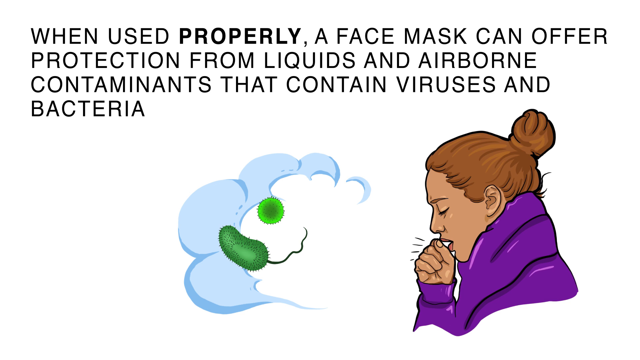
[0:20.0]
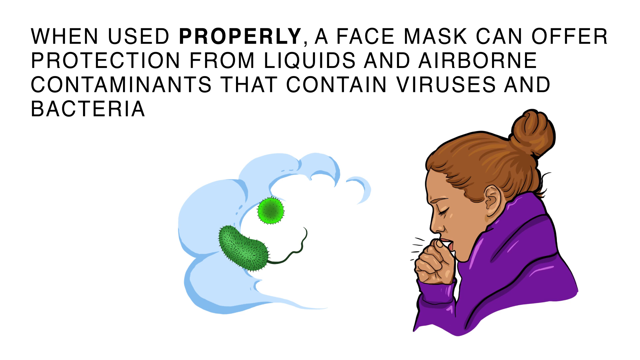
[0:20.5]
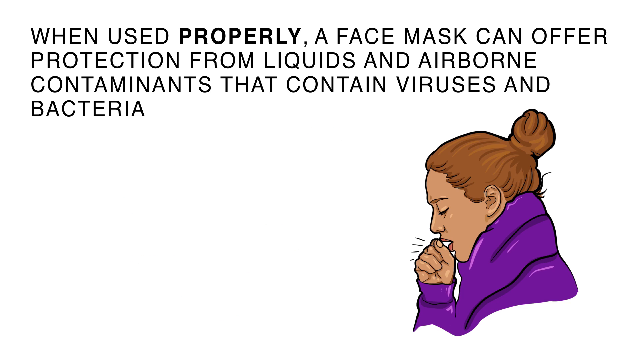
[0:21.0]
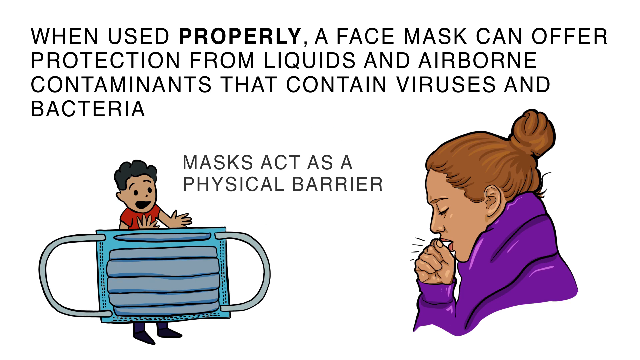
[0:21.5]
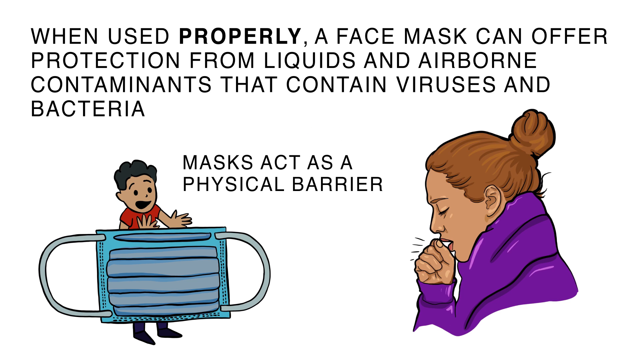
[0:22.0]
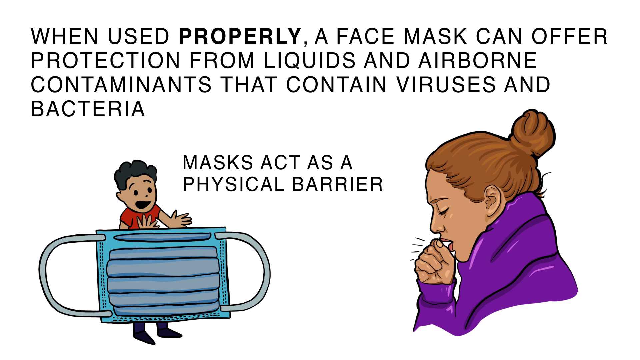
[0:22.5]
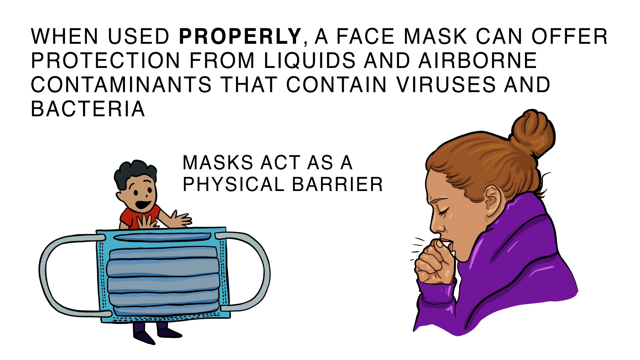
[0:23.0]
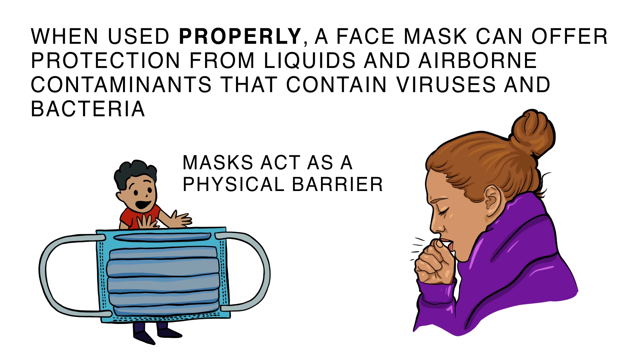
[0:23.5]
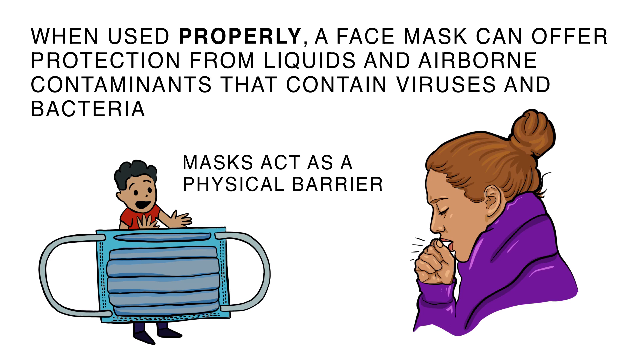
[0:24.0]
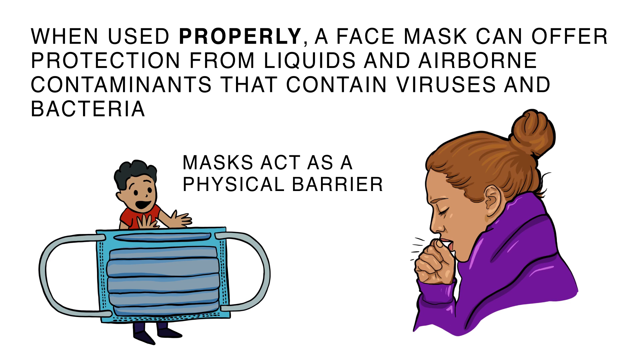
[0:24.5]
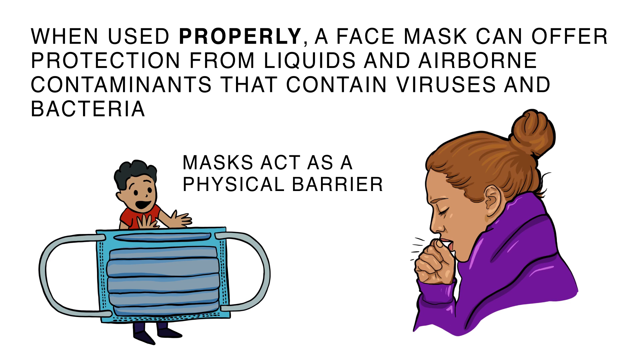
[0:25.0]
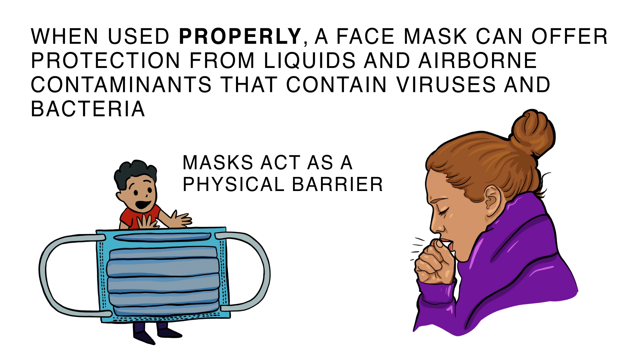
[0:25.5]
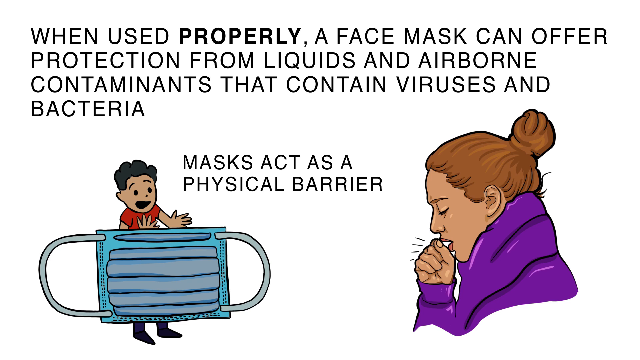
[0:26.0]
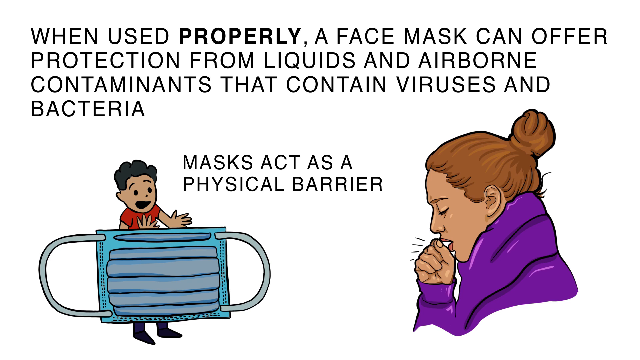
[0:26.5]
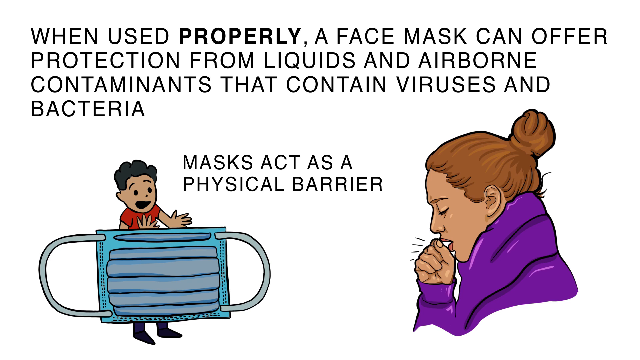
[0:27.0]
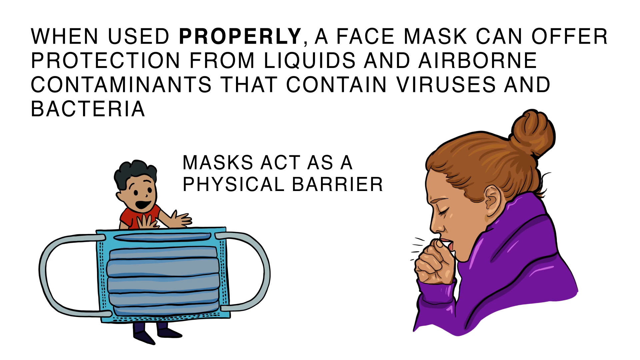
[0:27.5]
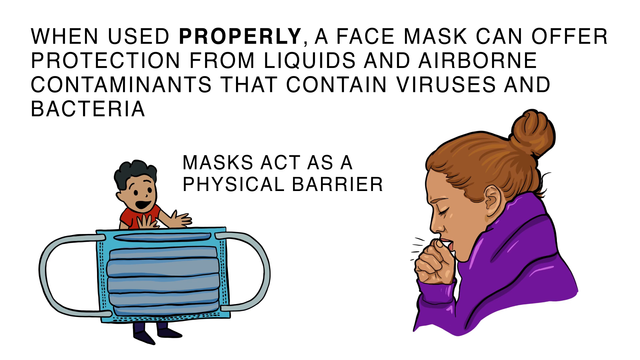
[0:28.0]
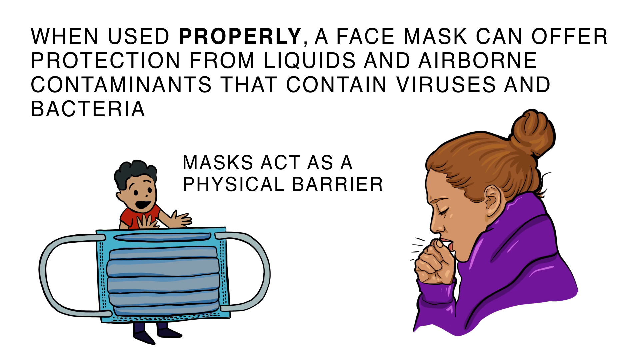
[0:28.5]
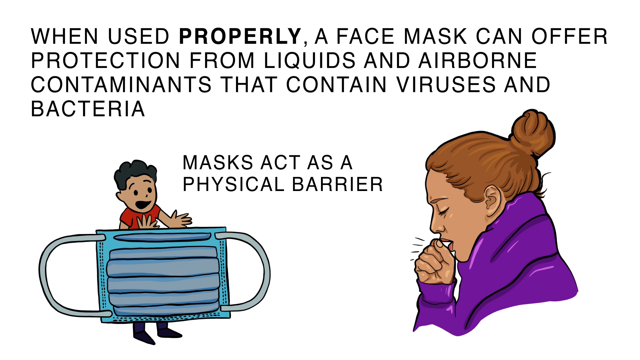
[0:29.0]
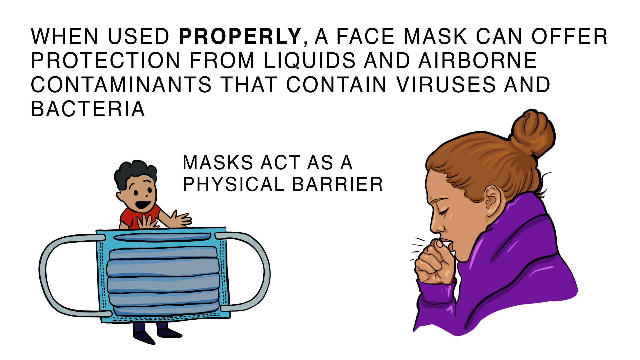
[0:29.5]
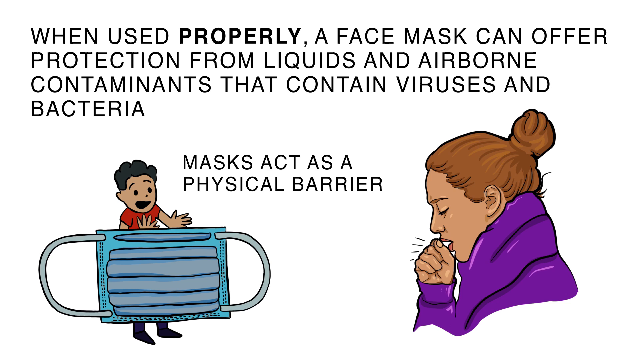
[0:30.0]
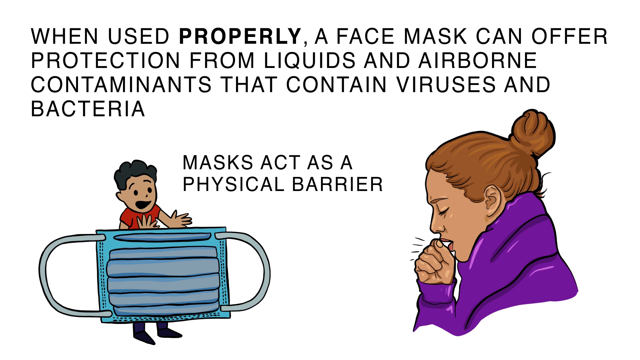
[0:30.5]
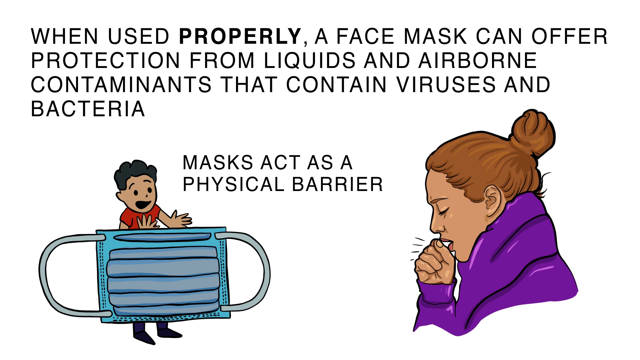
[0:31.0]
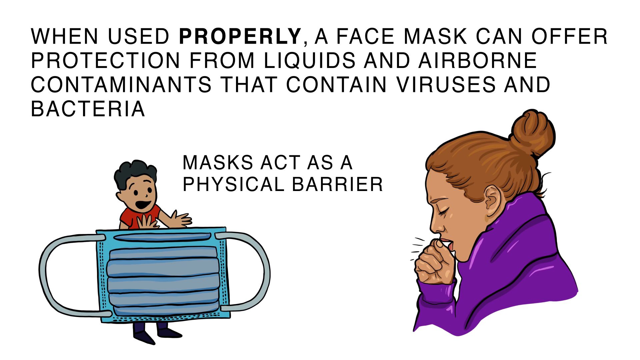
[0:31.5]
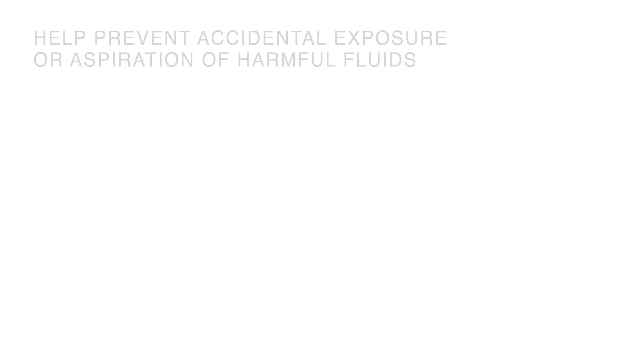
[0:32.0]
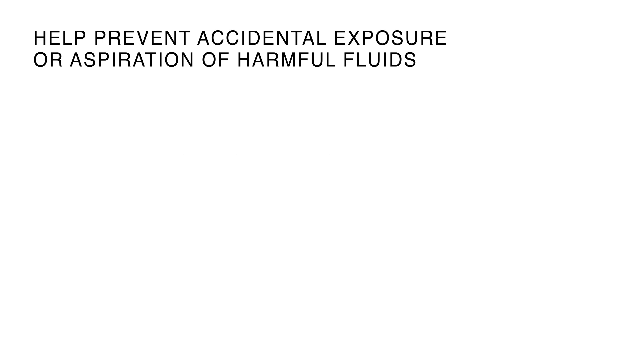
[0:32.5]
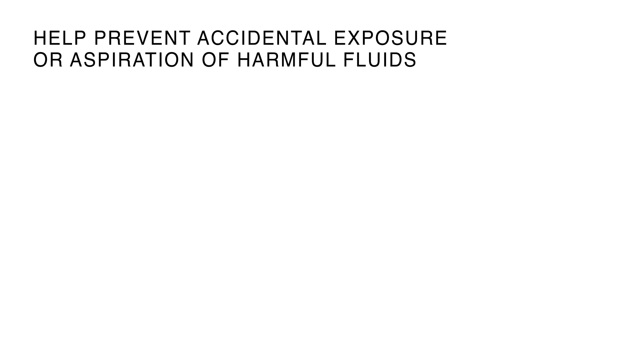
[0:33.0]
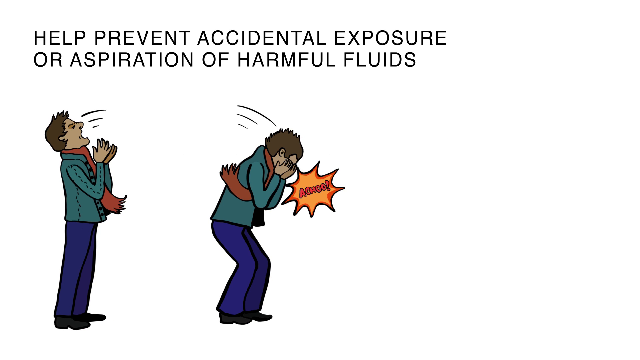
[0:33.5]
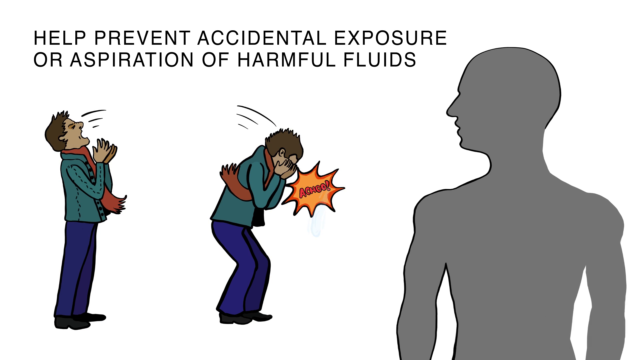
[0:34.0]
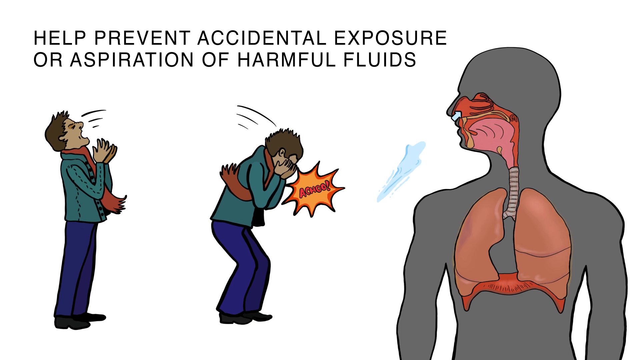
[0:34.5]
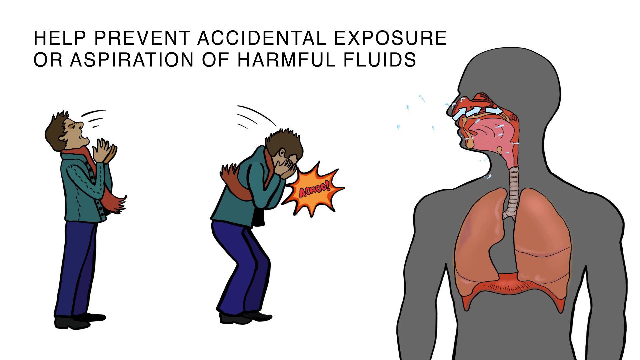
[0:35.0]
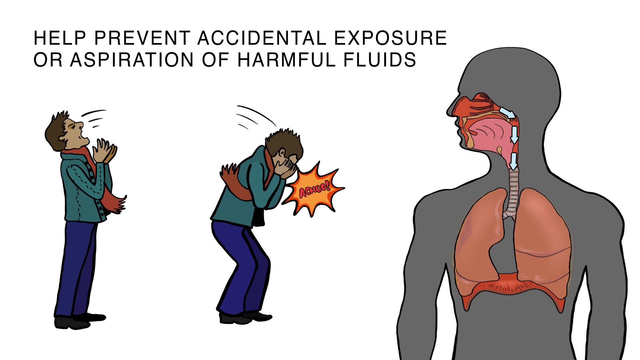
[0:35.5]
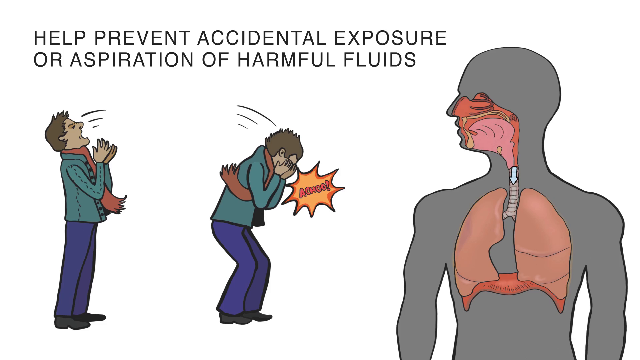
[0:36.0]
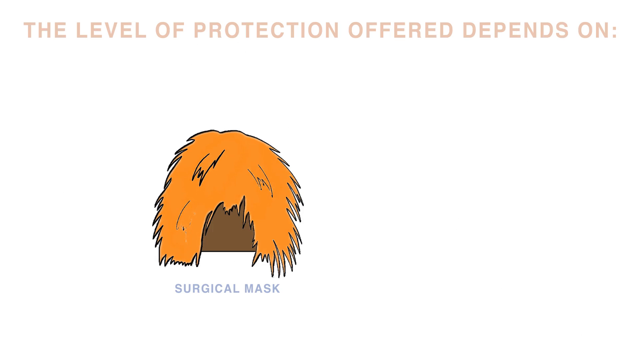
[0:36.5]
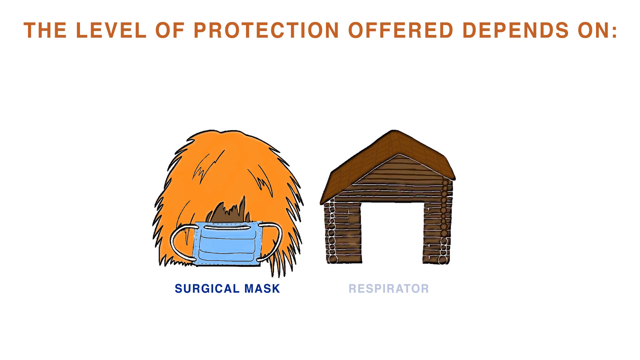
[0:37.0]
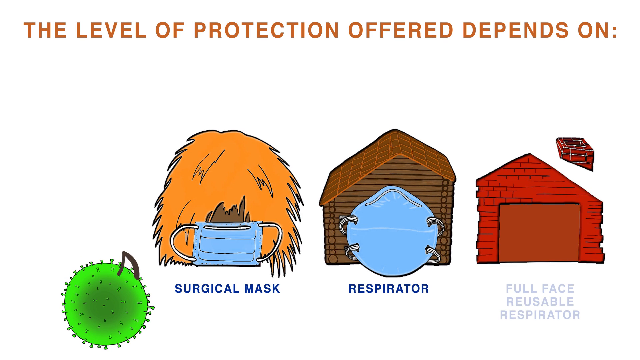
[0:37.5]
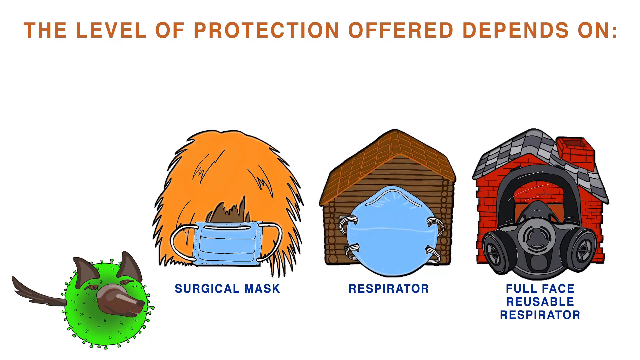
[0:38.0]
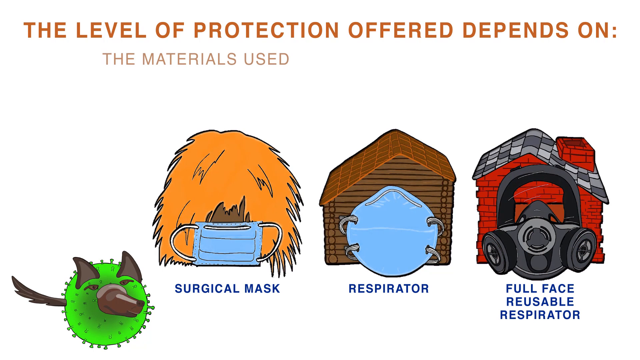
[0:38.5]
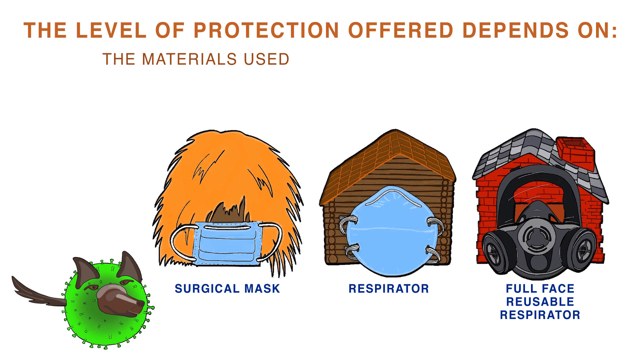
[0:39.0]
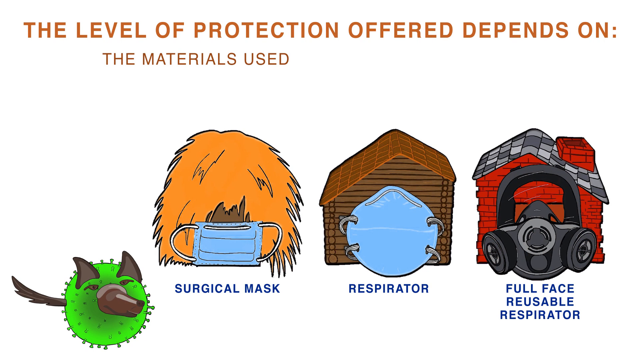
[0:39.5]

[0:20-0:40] A white screen shows black text and two images that look like cartoon drawings. The text reads "when used properly, a face mask can offer protection from liquids and airborne contaminants that contain viruses and bacteria." Below that, text reads "masks act as a barrier. a physical barrier." The image at the bottom left shows a small boy and a face mask. The image on the right shows a woman coughing into her hand; her hair is pulled back into a bun and she wears a puffy purple garment. The video transitions to more black text reading "help prevent accidental exposure or aspiration of harmful fluids," with a cartoon drawing of a man dressed for cool weather in pants, a sweater and a scarf around his neck, sneezing into his hands. The video then transitions to three images of surgical masks being used for protection, along with a respirator.